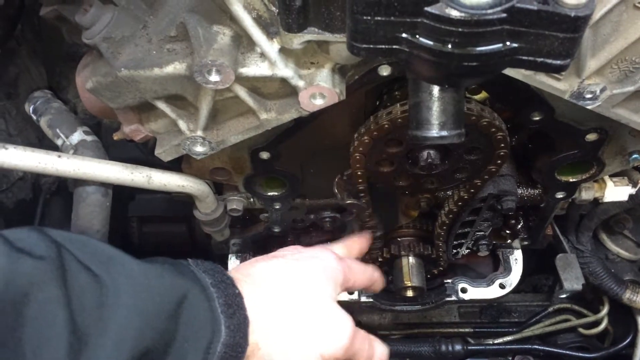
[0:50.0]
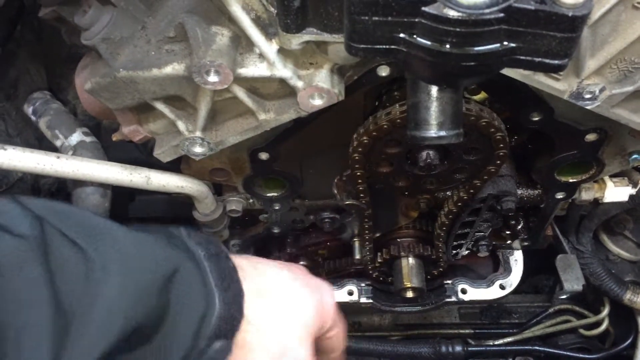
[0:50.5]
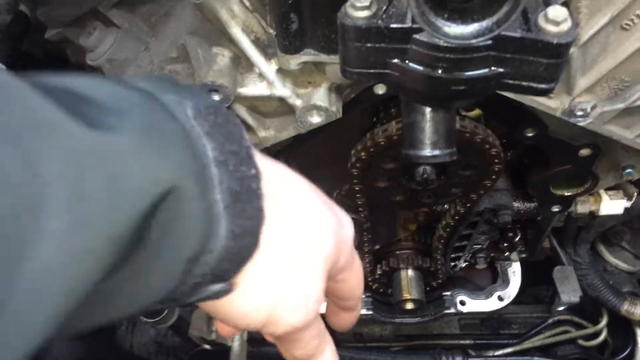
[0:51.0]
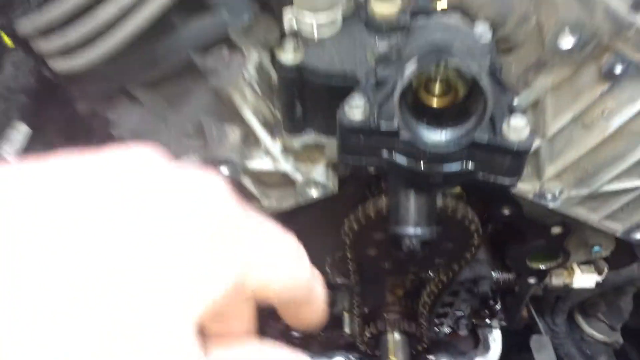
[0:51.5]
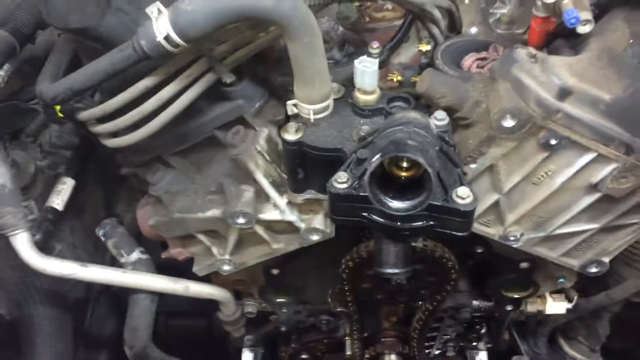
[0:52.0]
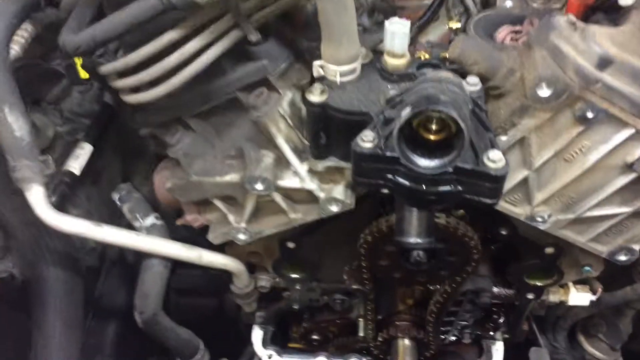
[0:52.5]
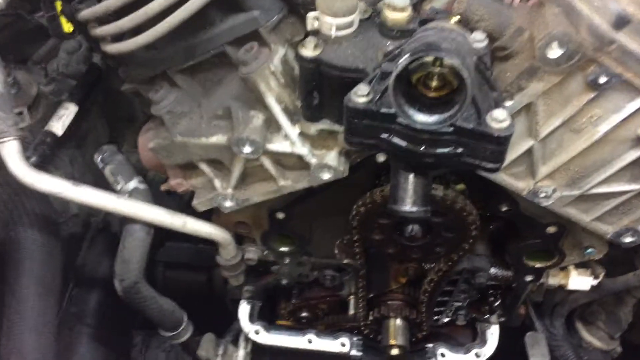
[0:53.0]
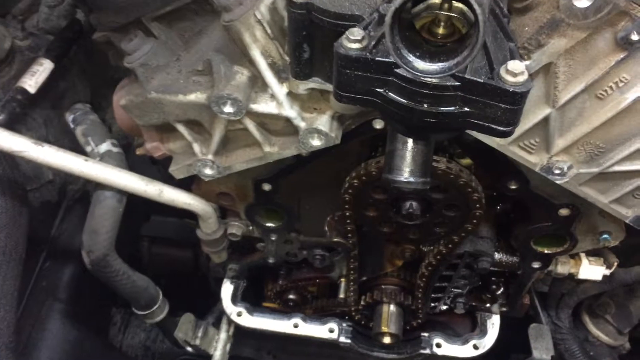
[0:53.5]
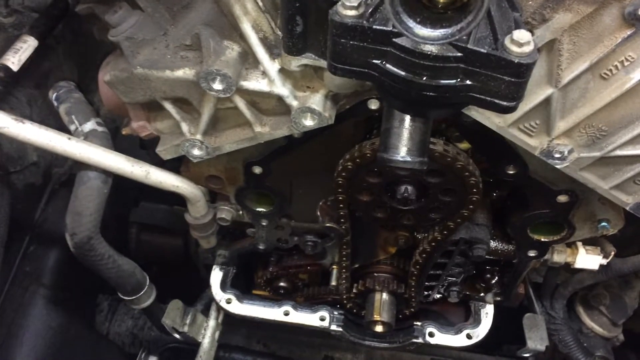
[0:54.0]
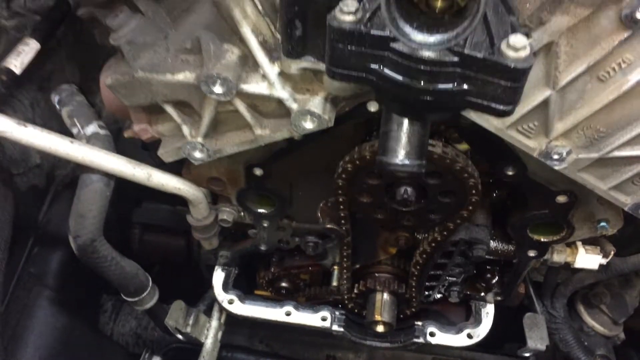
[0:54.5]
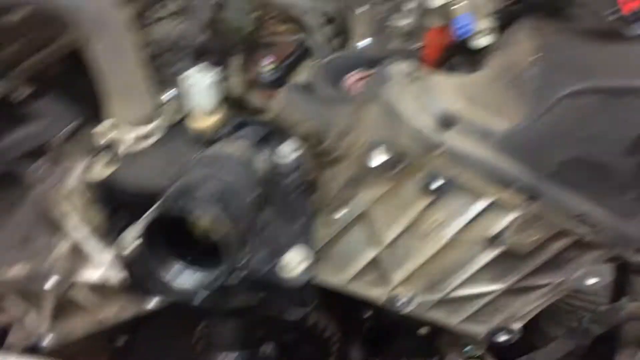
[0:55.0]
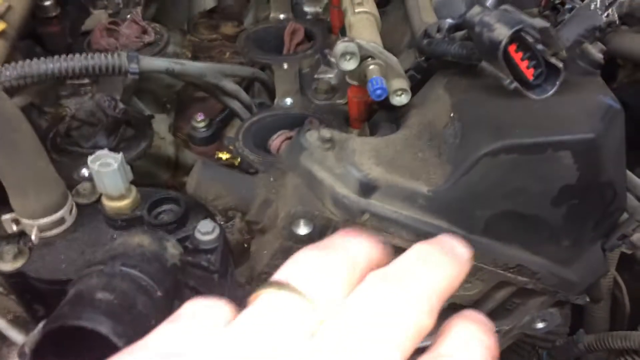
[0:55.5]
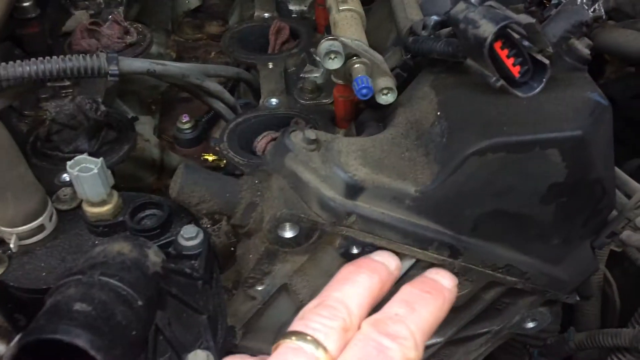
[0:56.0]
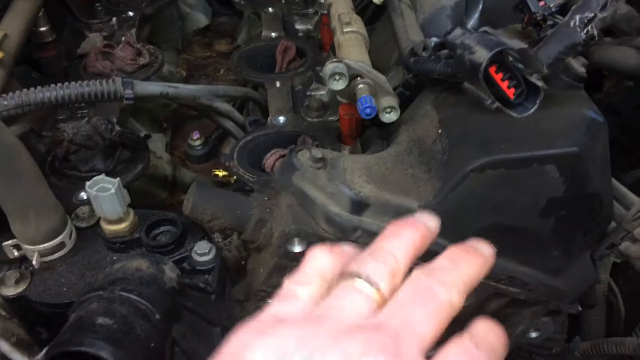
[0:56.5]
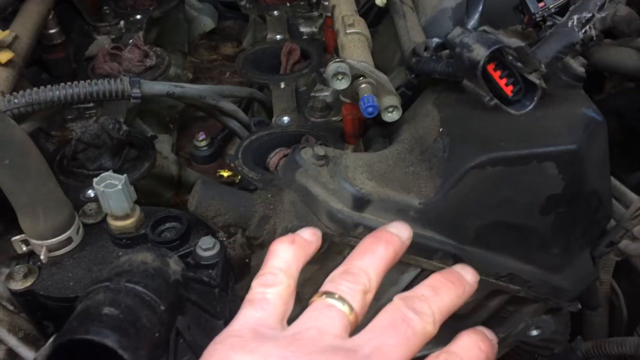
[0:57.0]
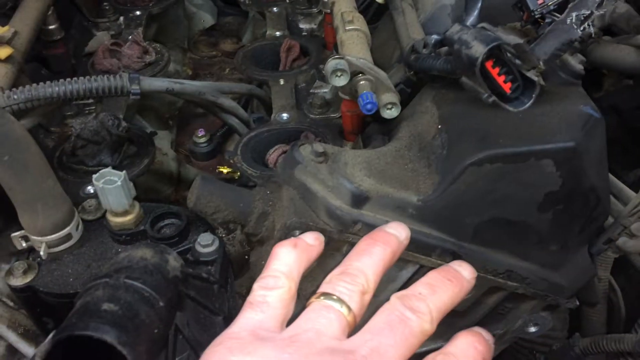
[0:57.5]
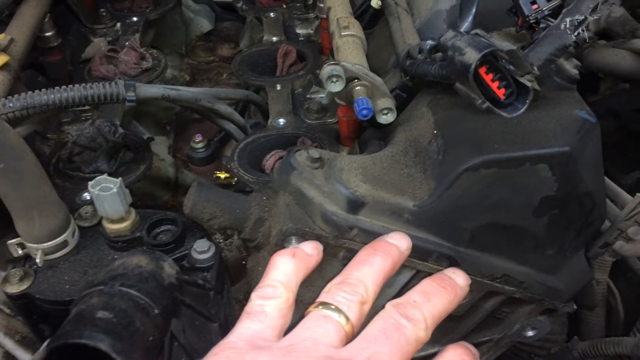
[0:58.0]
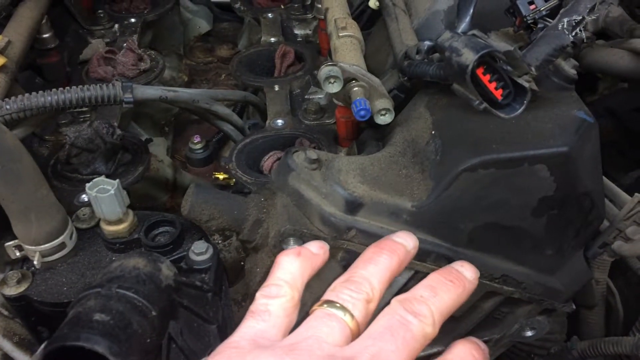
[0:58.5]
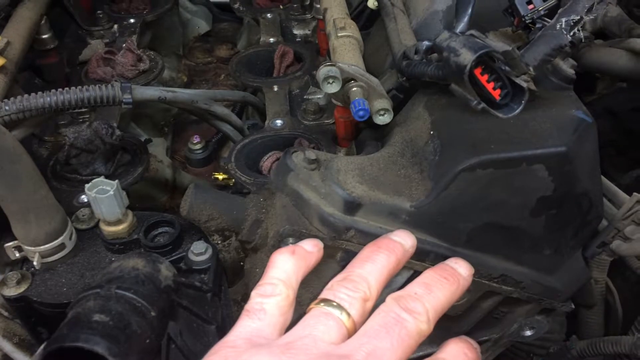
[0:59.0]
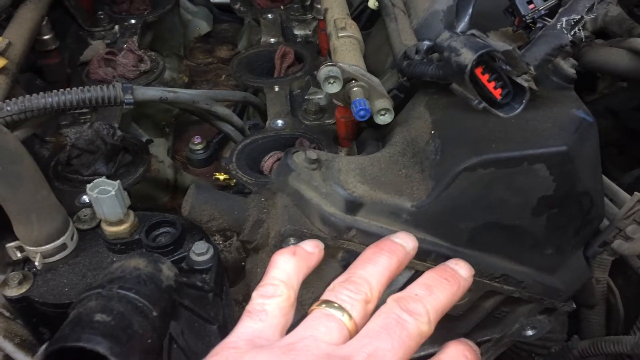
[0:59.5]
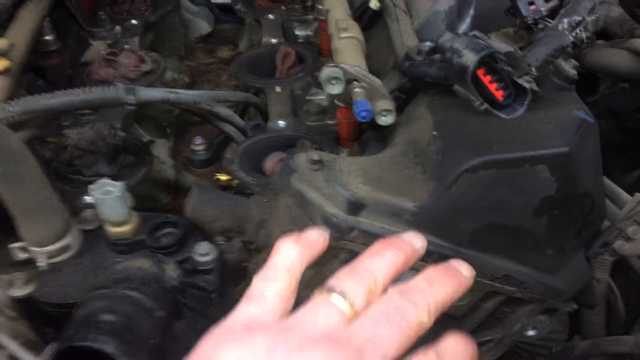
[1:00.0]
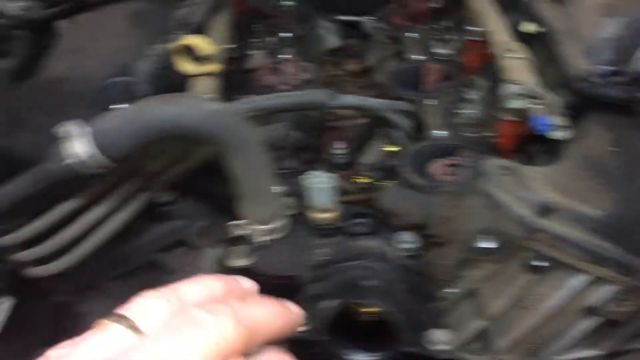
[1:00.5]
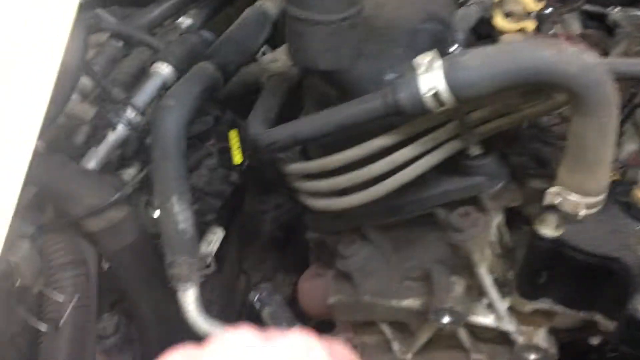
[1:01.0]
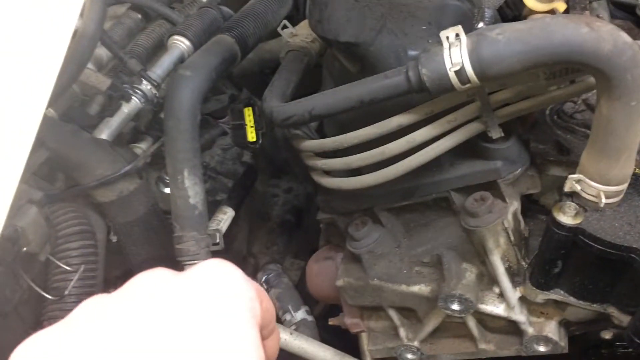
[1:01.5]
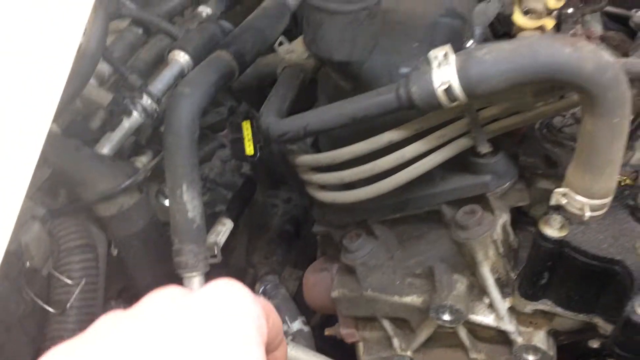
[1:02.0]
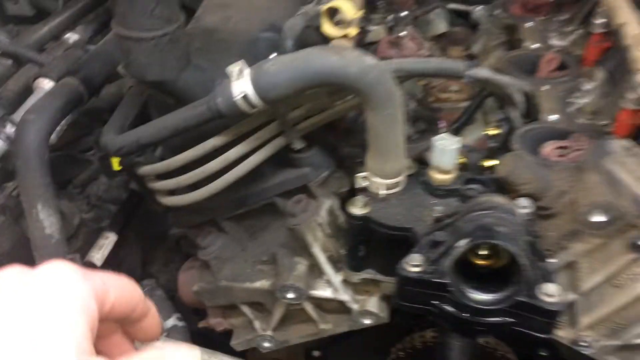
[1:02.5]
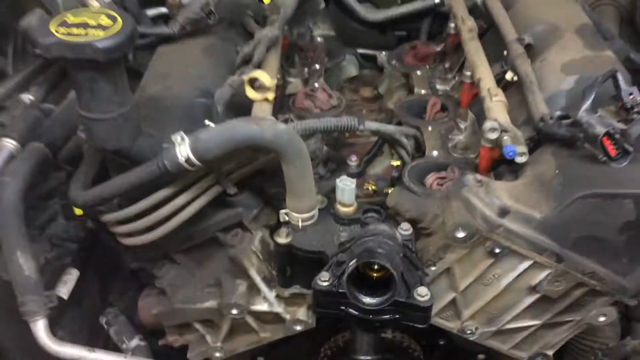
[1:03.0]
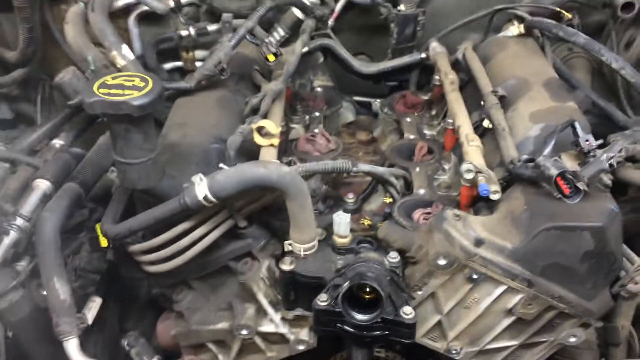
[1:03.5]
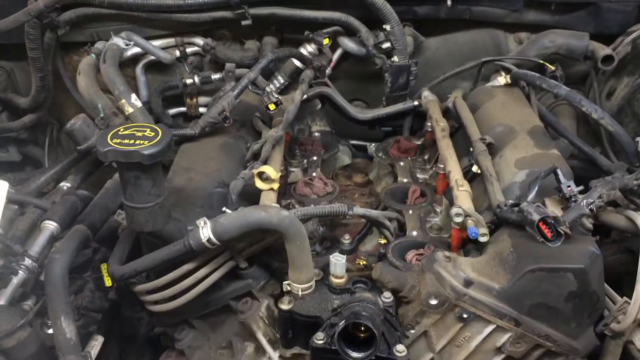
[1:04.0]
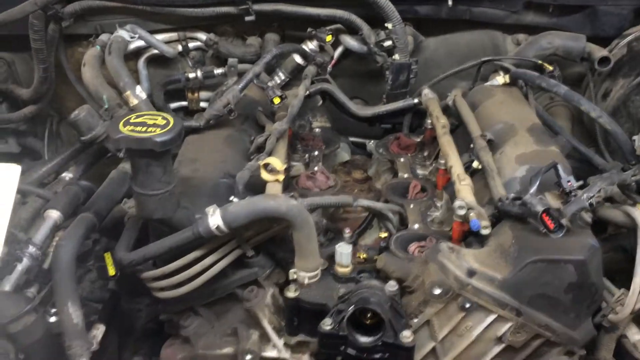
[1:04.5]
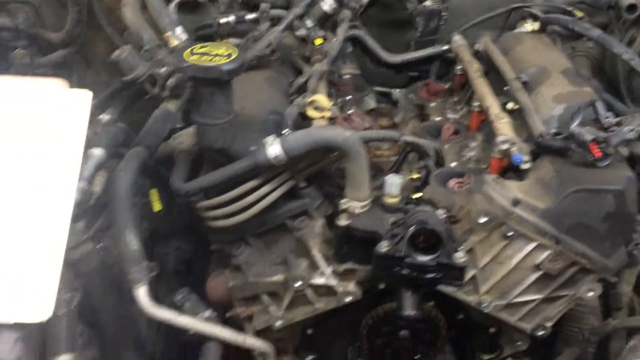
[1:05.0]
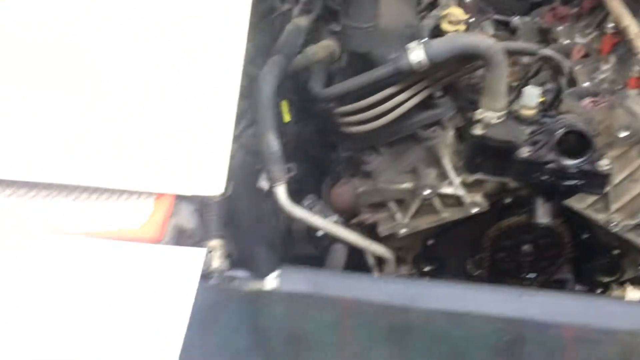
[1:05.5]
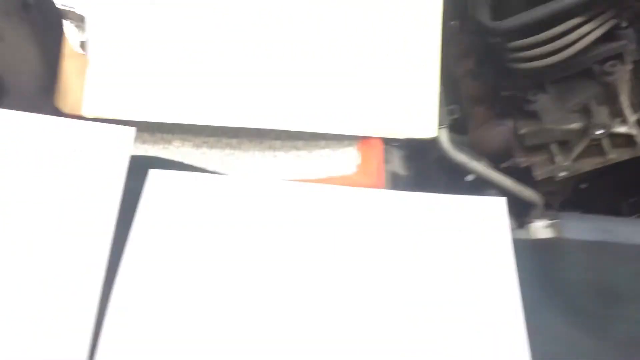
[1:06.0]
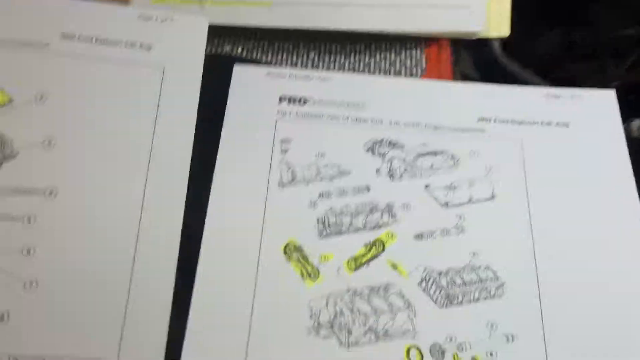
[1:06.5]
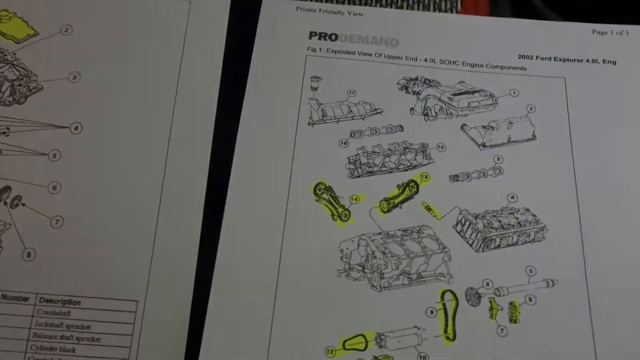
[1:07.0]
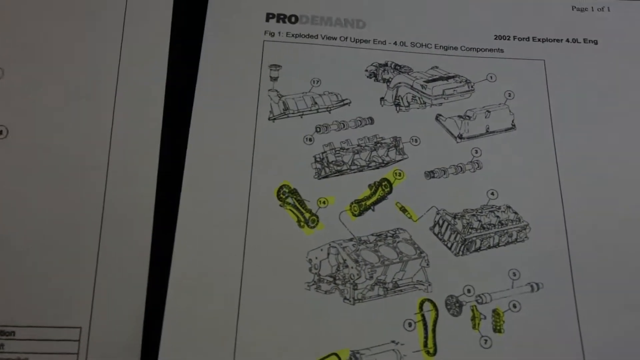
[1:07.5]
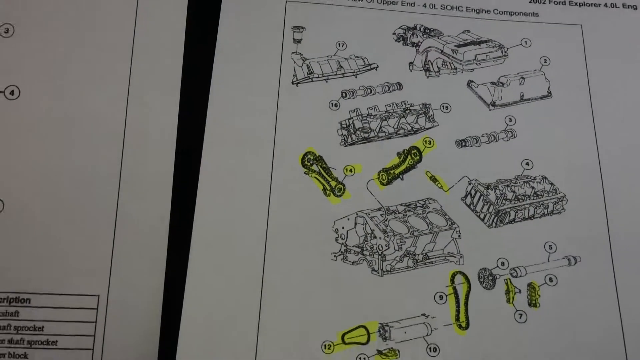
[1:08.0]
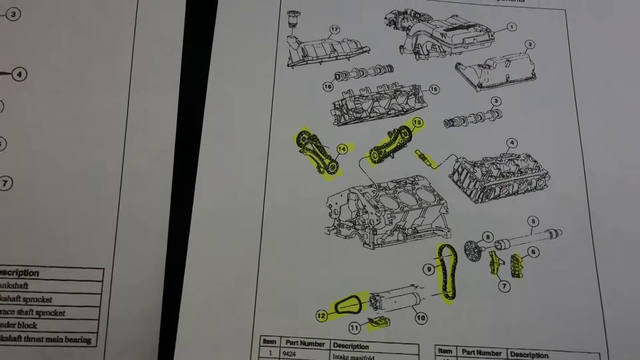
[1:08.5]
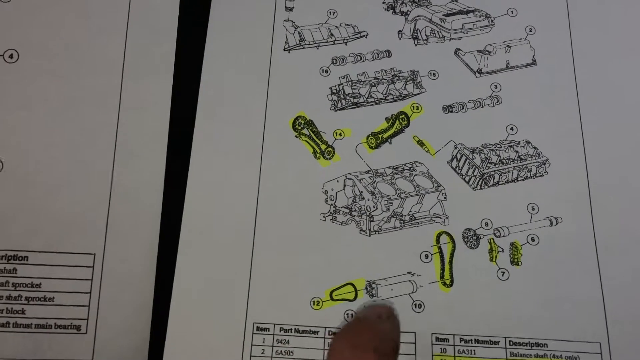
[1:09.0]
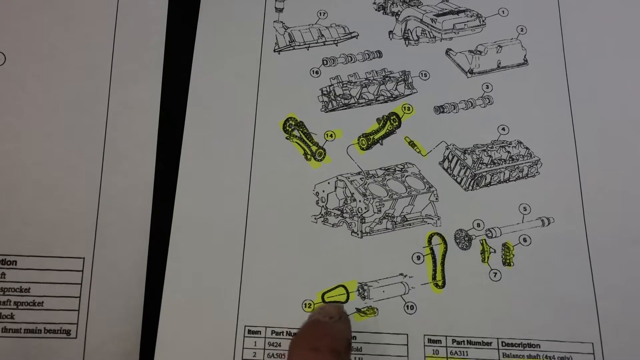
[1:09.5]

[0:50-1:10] The man finishes showing the chain, then moves the camera slightly to the right and points with all his fingers at another component of the car, which seems to contain some sort of liquid. It is black, with a brownish beige layer of dust on just its left side, and has a few dark gray or black wires and tubes connected to it. He moves the camera back to the left, and a ring is visible on his hand. He zooms out to show the entire inside of the hood. He then moves to the left, where there is a table with some books and pieces of paper. The papers are white with designs on them, drawn in black, some of them highlighted. He moves the camera back and forth and points at the designs.